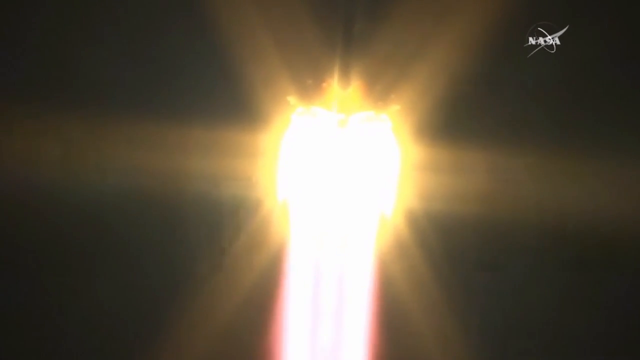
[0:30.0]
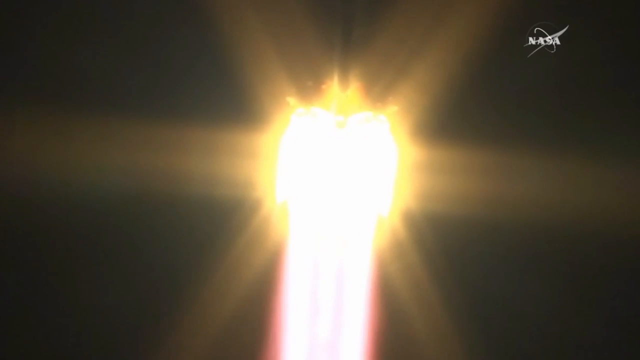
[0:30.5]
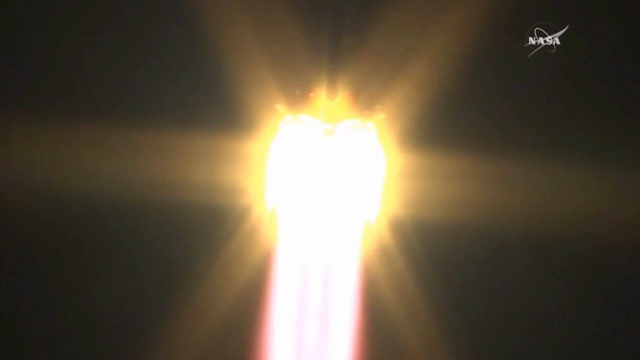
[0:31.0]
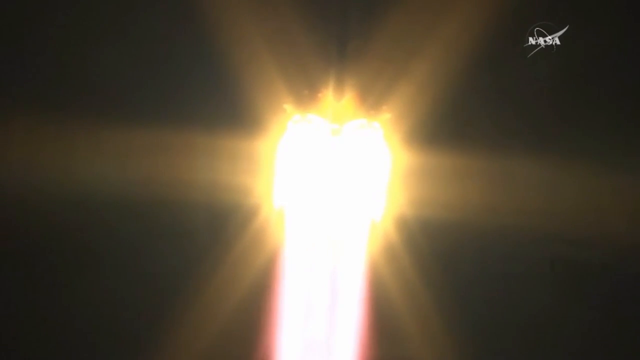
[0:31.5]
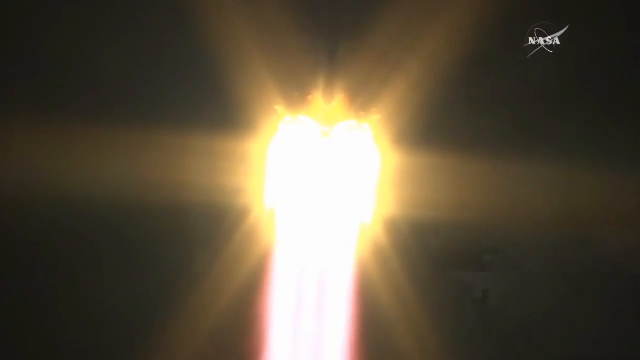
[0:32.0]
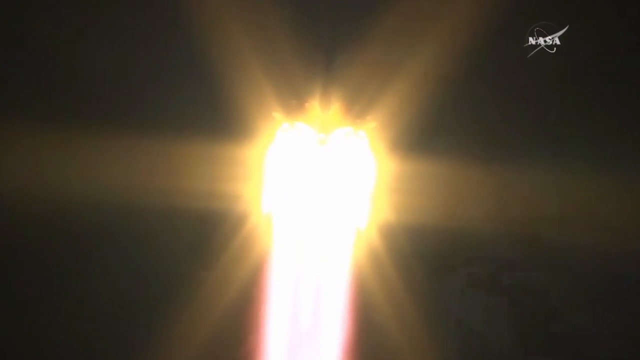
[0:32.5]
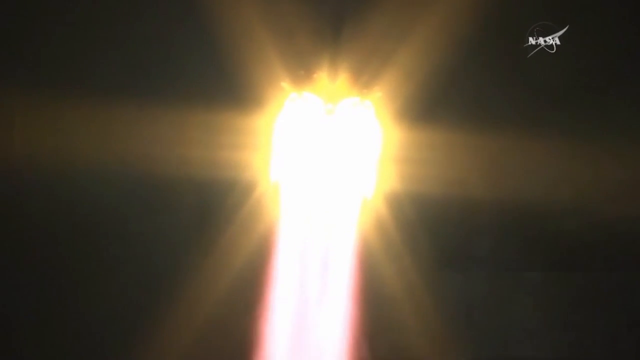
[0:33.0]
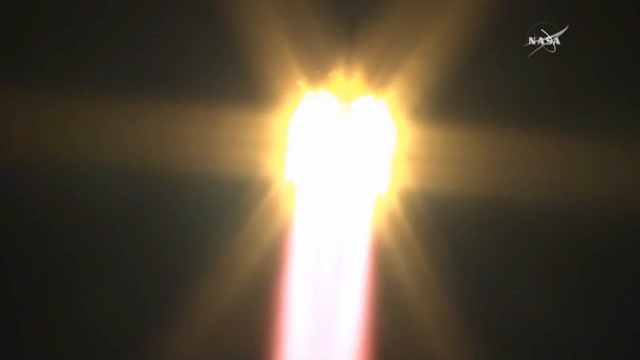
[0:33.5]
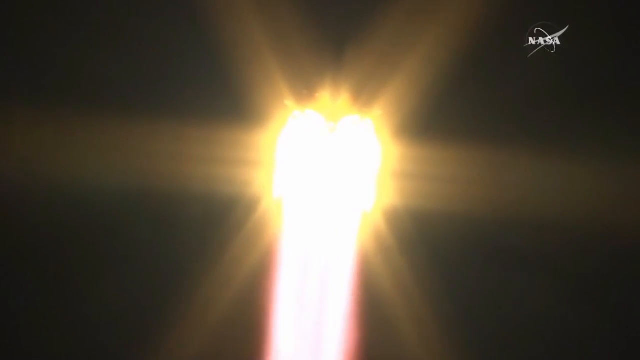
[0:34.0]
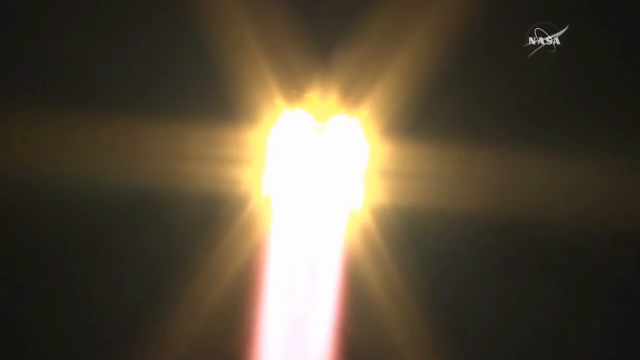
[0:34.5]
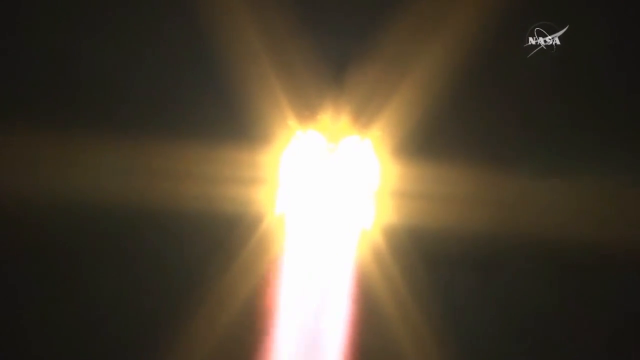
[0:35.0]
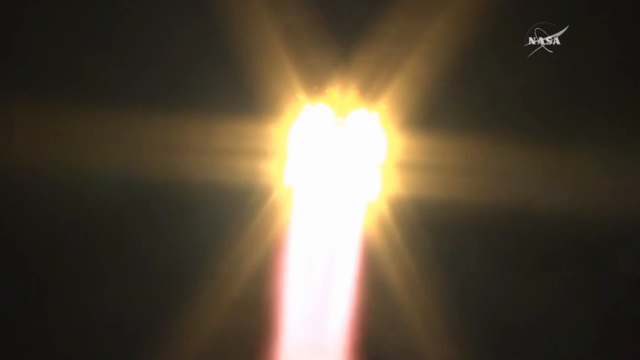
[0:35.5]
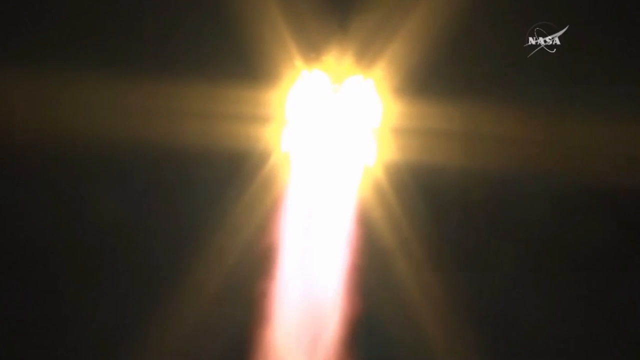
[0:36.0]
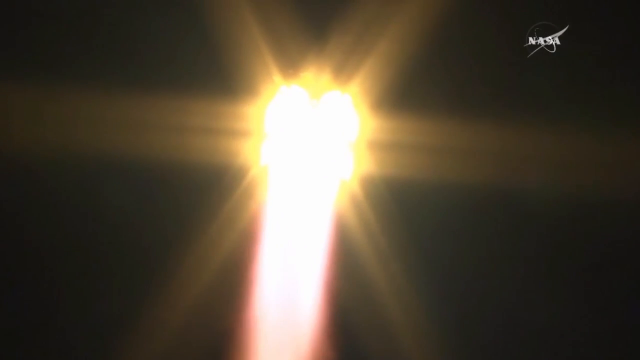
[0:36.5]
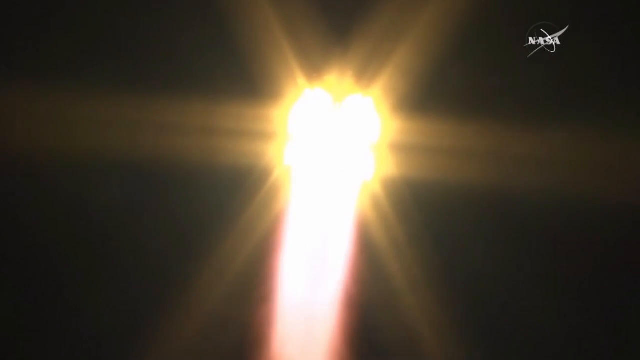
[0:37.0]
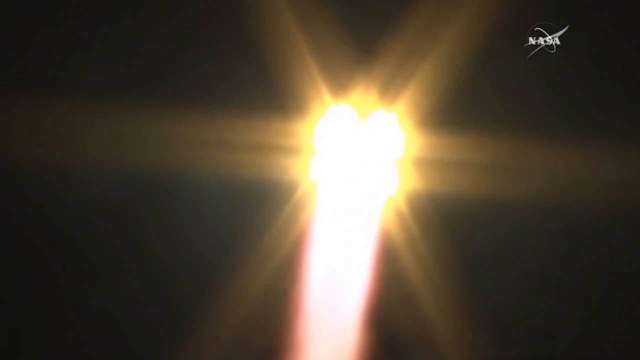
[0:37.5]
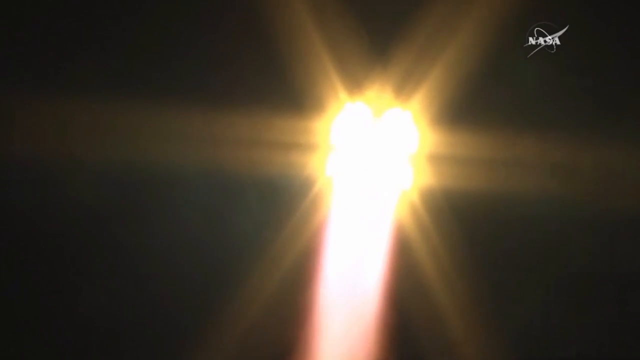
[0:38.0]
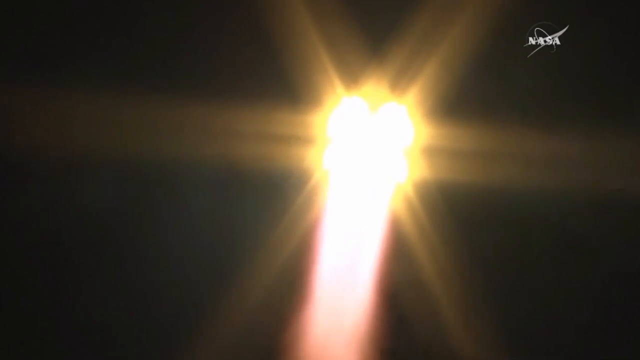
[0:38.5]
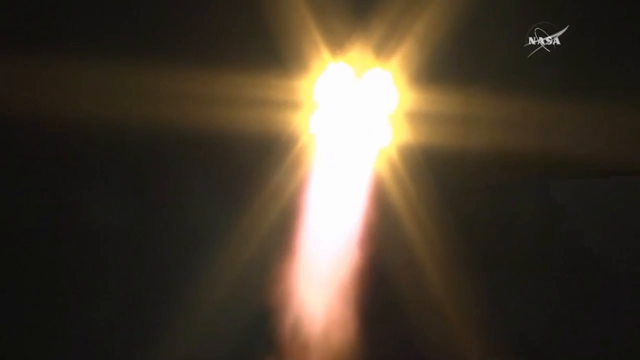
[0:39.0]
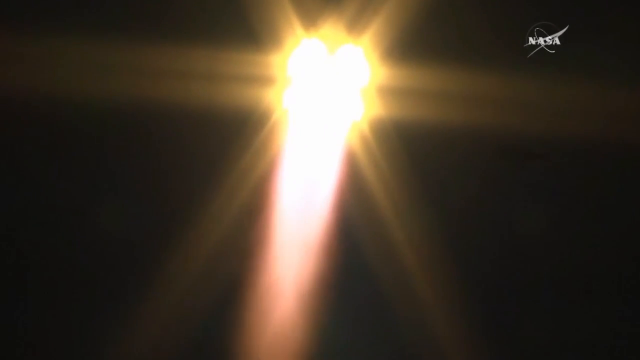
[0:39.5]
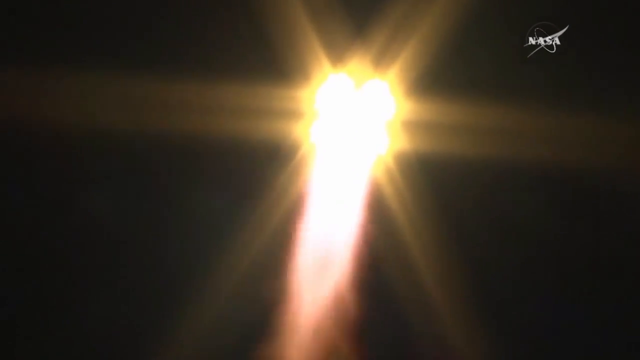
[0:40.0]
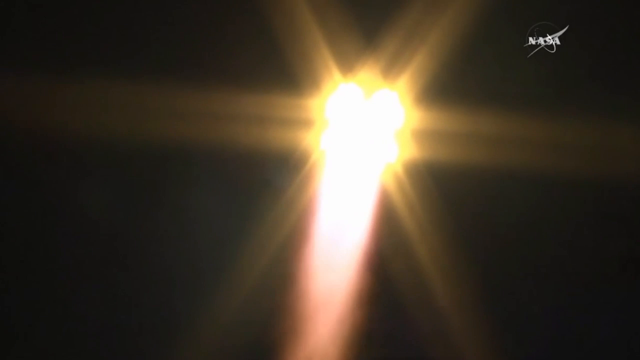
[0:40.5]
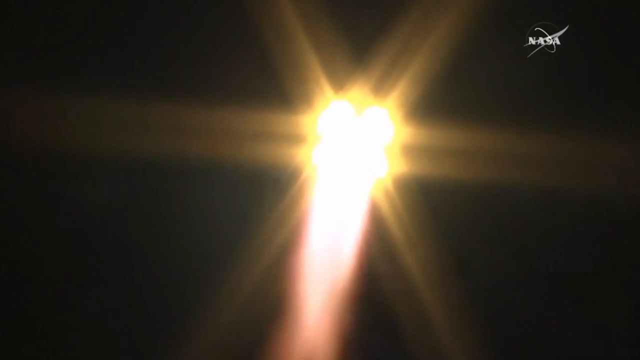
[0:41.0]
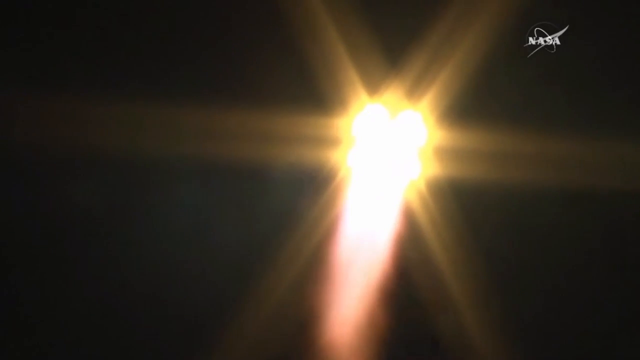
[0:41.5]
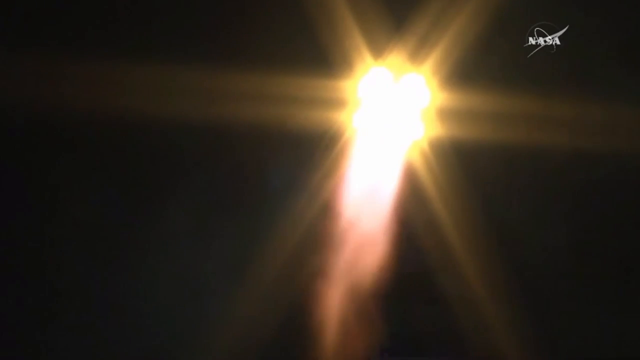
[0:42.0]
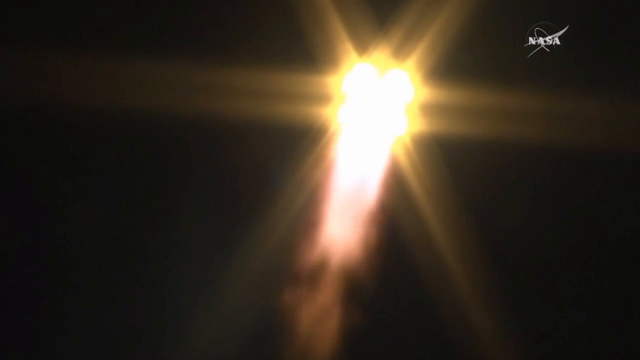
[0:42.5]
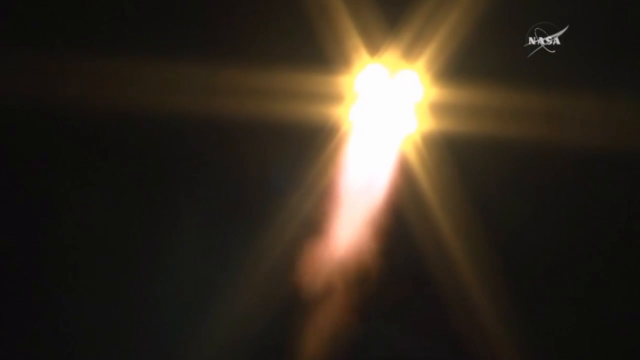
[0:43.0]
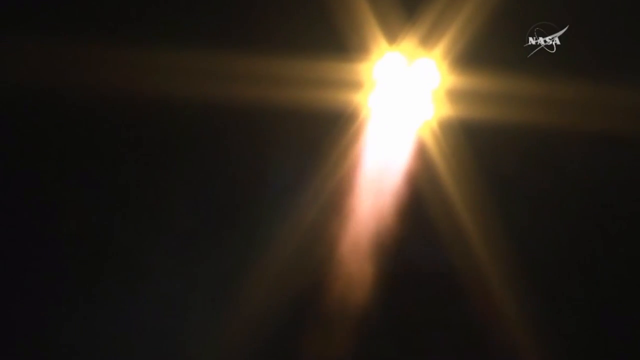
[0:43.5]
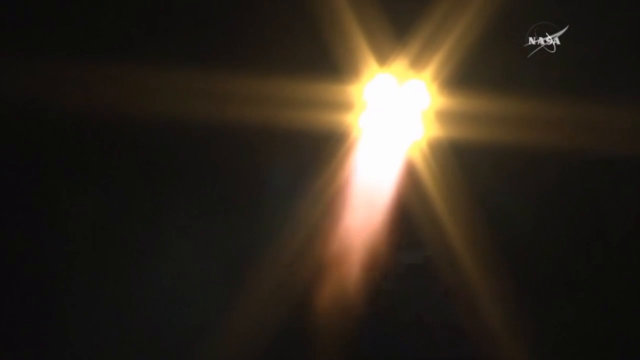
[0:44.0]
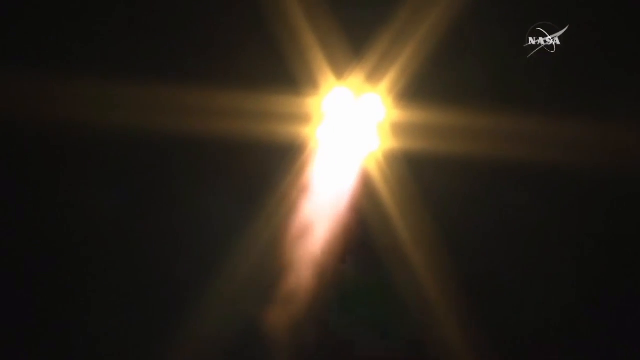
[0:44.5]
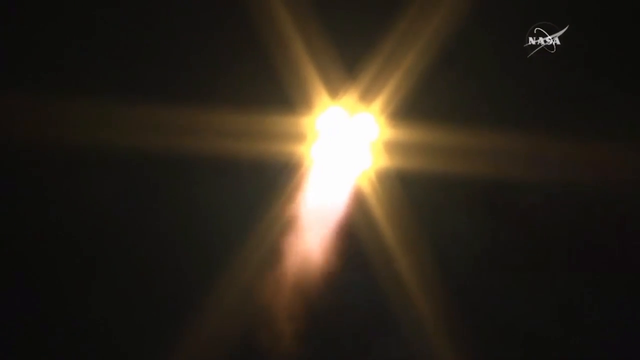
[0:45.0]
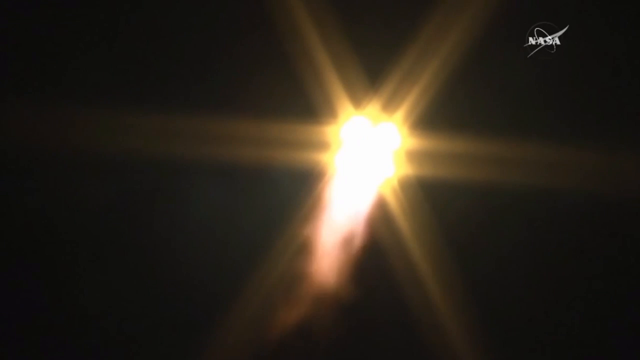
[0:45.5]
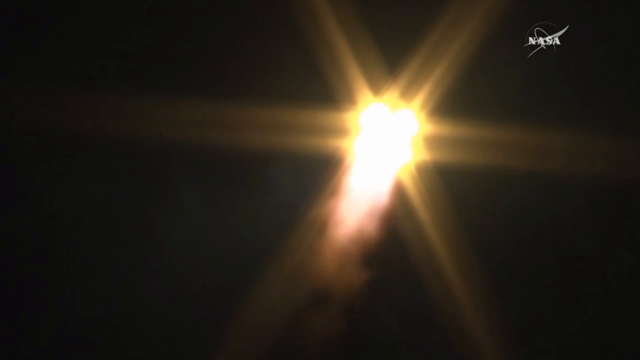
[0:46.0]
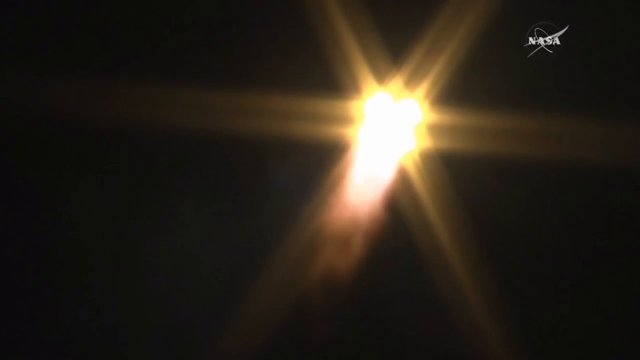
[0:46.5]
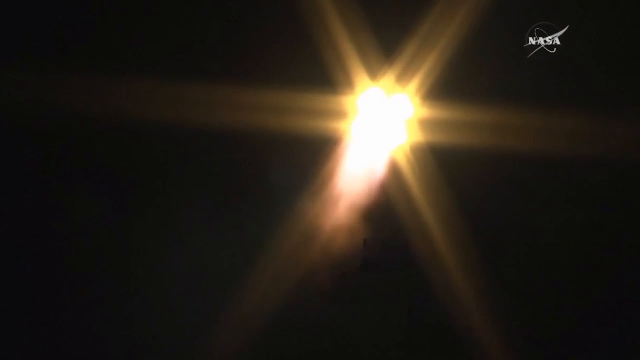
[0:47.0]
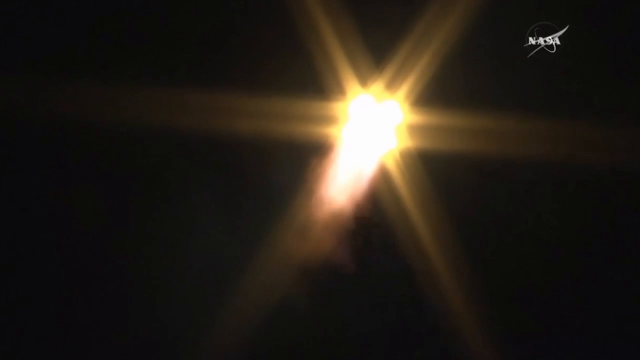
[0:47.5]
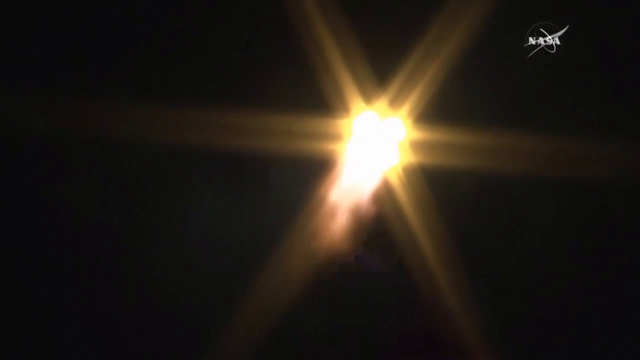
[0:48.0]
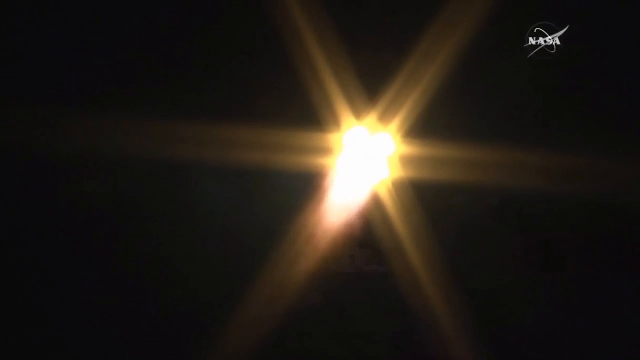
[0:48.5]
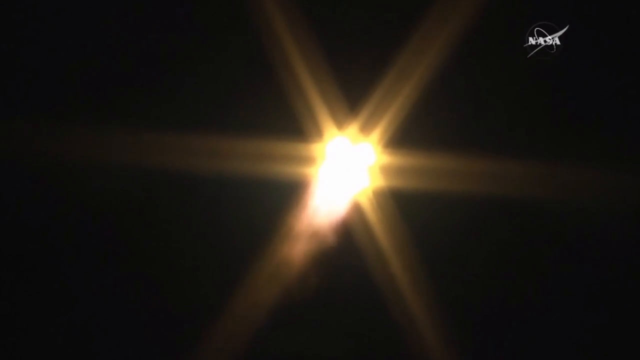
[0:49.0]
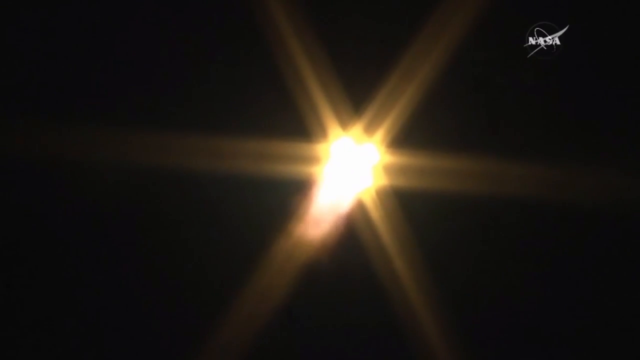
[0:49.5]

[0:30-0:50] A spaceship goes up in the air, very bright from the exhaust at its back, looking like a burning star or burning gas. "NASA" is on the screen. It is pitch black outside, so it is either very late at night or early in the morning. Only a bright light is visible as the spaceship goes up, appearing as a big orange ball with a red tail from the exhaust flames as it goes higher and higher.